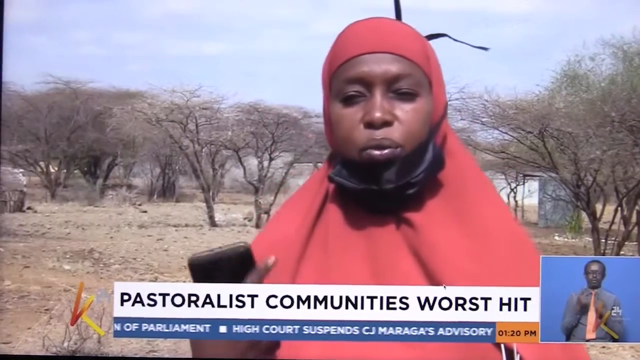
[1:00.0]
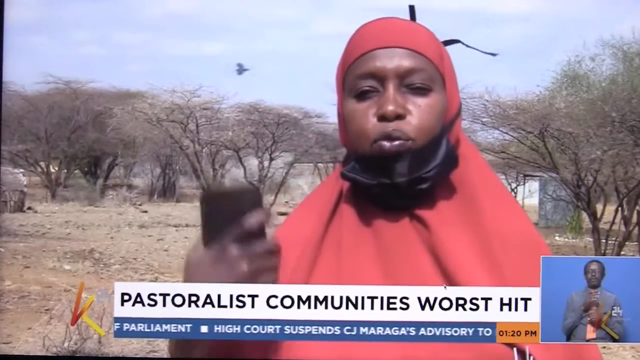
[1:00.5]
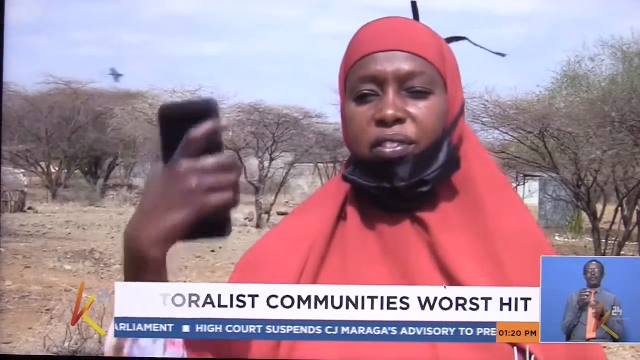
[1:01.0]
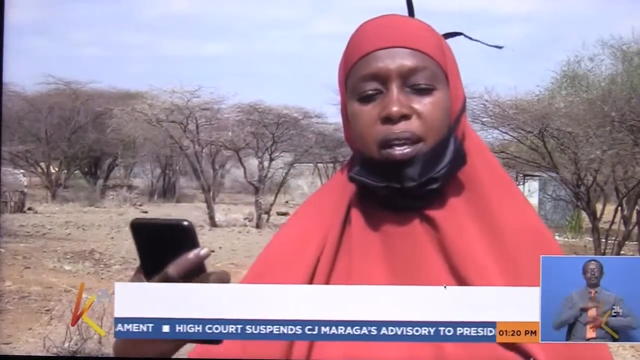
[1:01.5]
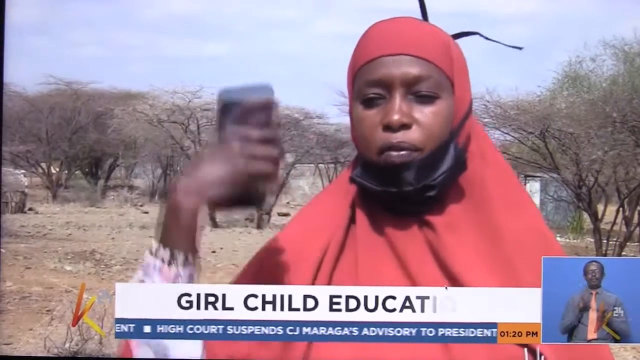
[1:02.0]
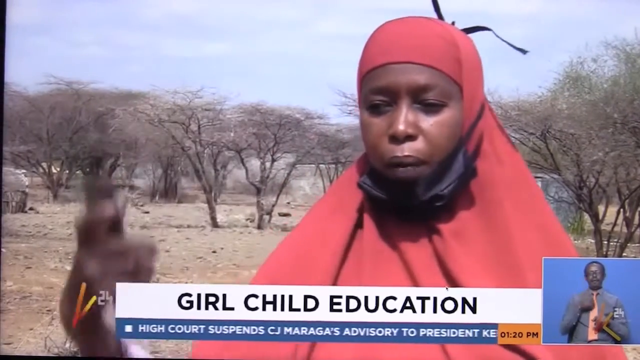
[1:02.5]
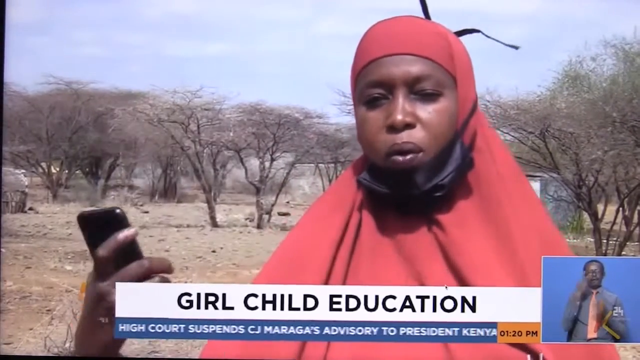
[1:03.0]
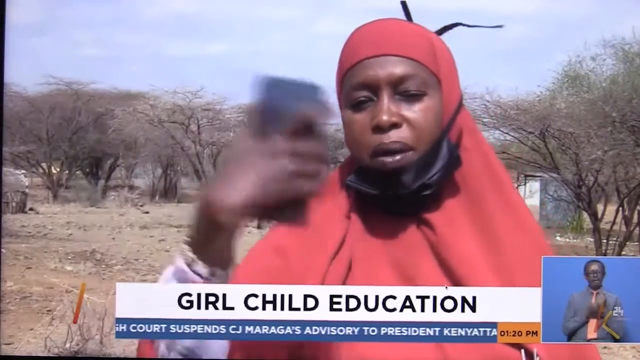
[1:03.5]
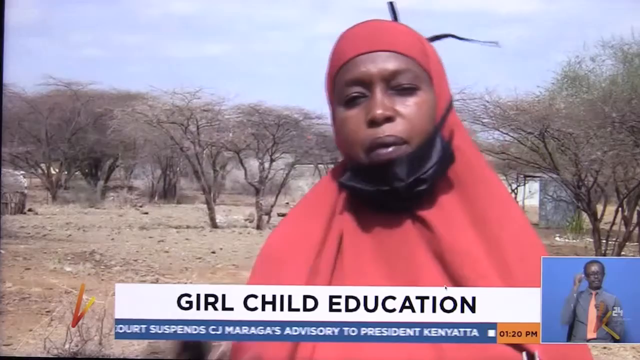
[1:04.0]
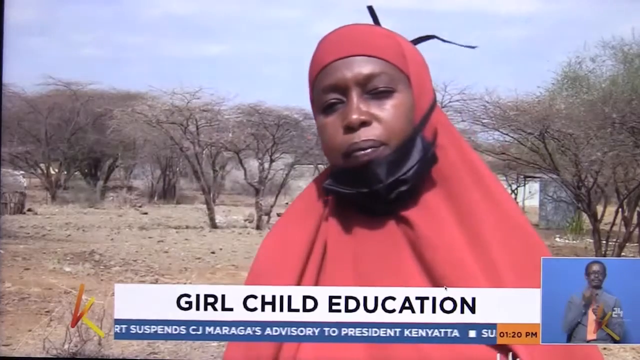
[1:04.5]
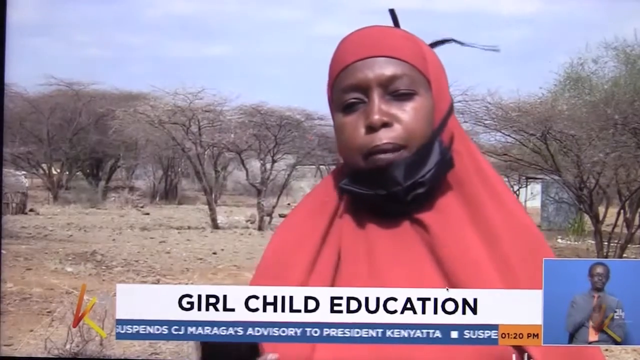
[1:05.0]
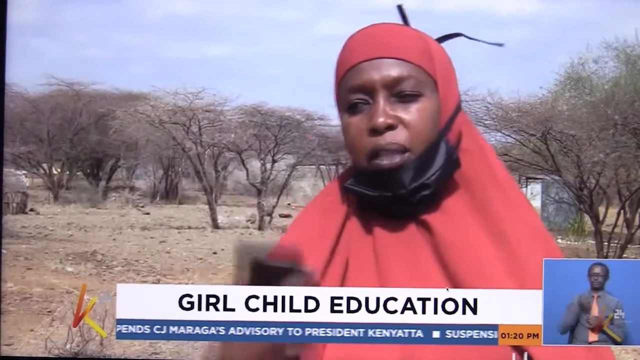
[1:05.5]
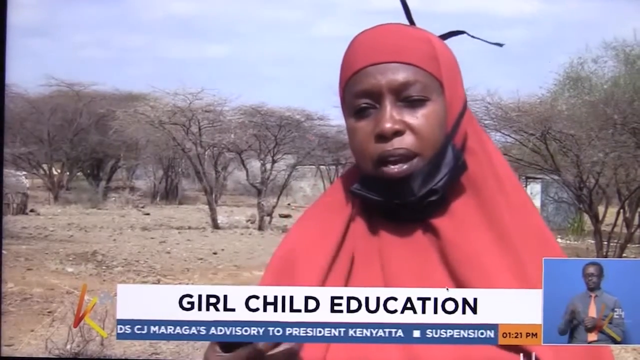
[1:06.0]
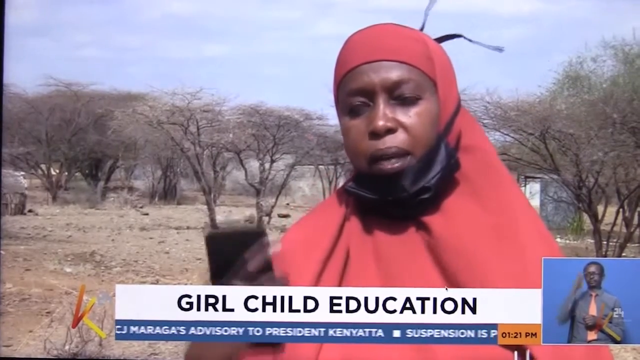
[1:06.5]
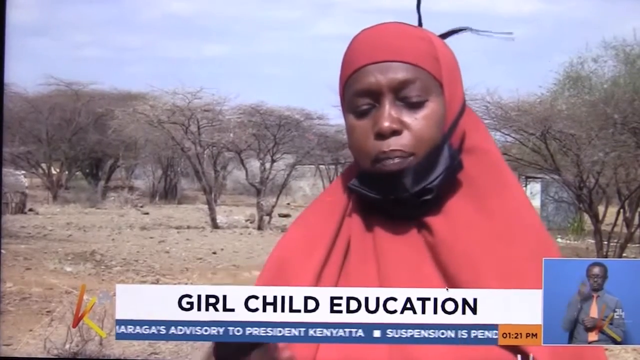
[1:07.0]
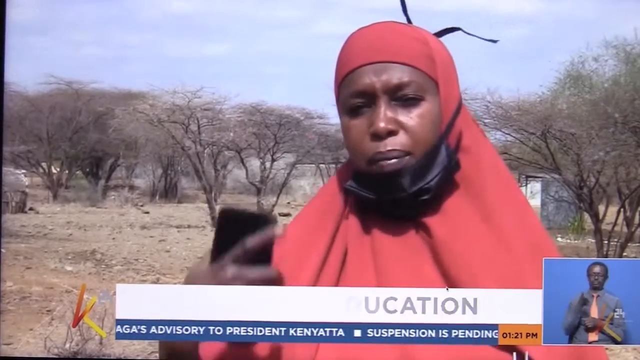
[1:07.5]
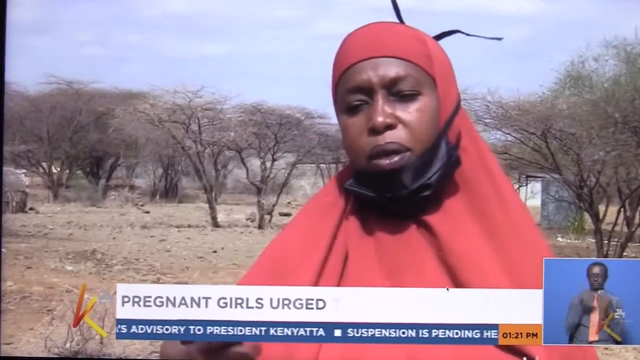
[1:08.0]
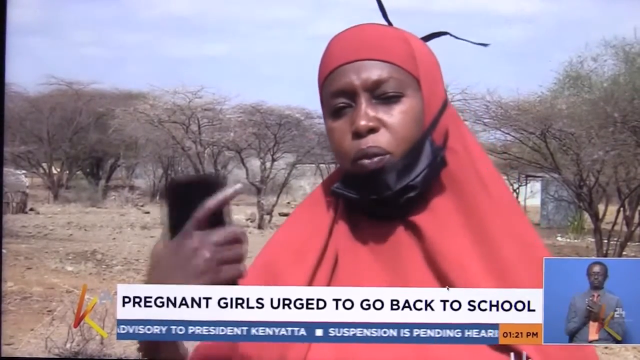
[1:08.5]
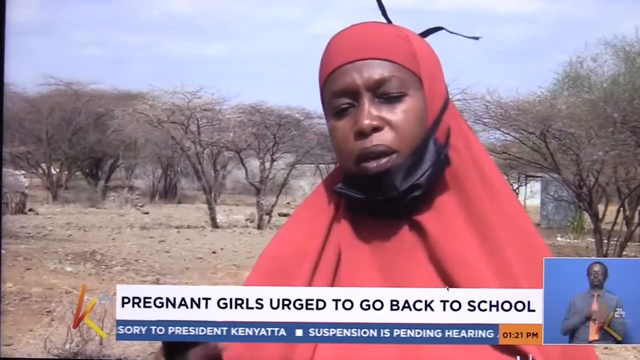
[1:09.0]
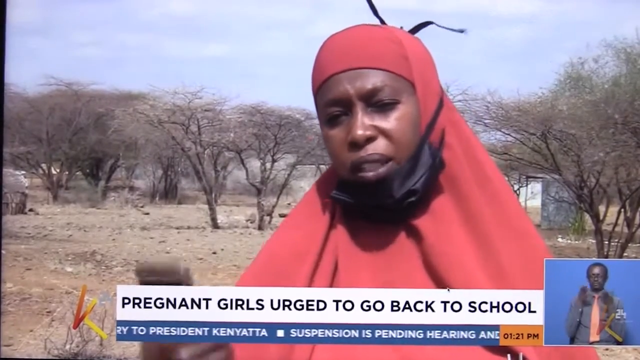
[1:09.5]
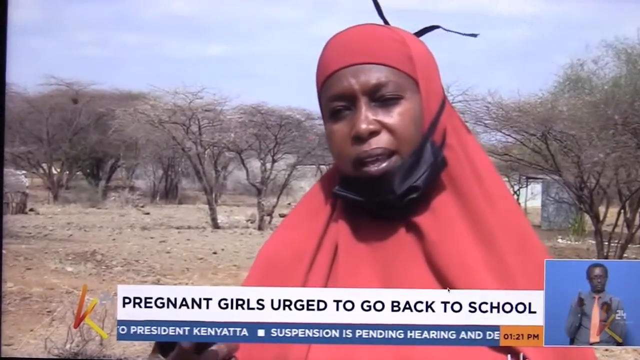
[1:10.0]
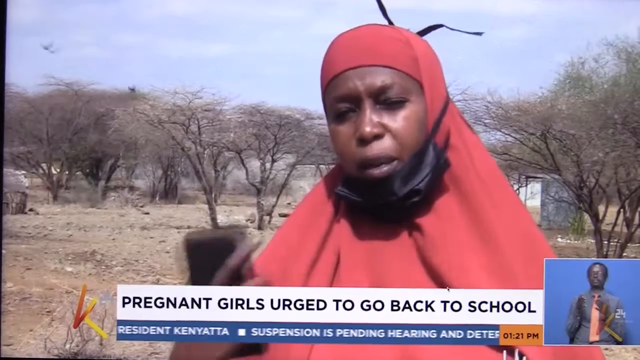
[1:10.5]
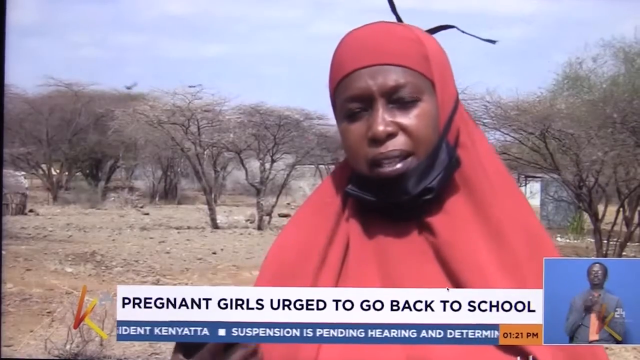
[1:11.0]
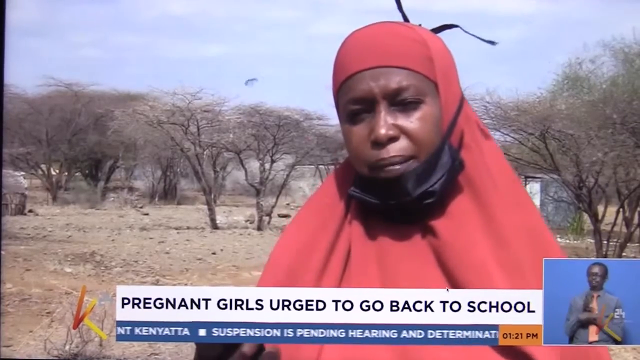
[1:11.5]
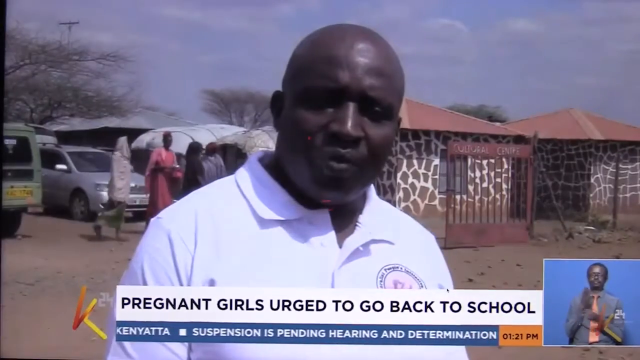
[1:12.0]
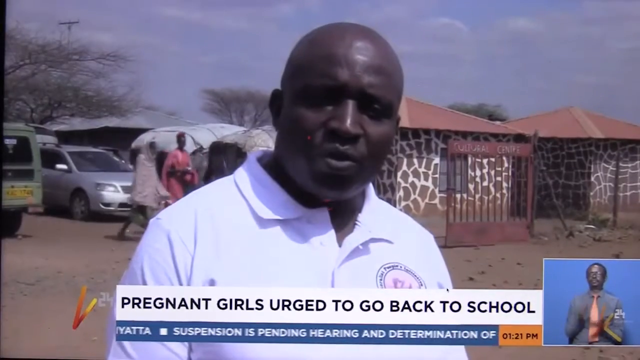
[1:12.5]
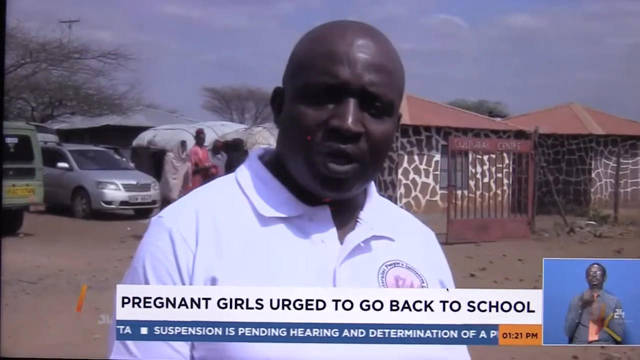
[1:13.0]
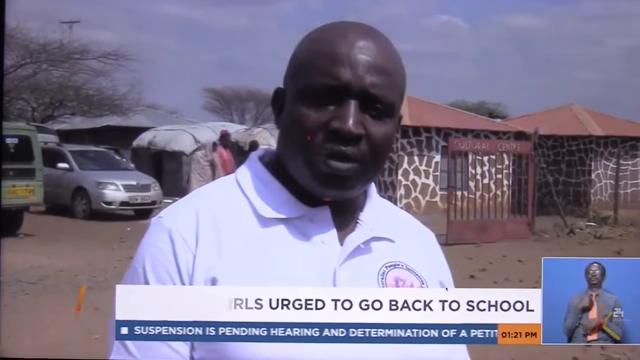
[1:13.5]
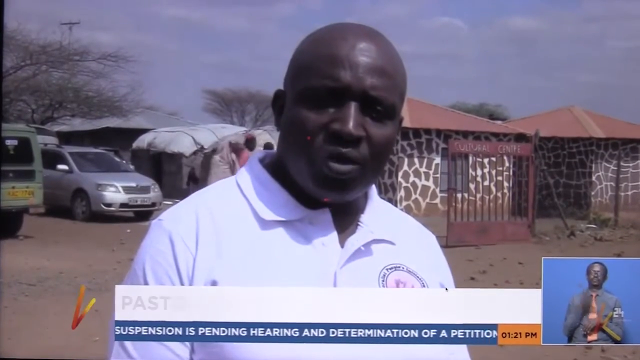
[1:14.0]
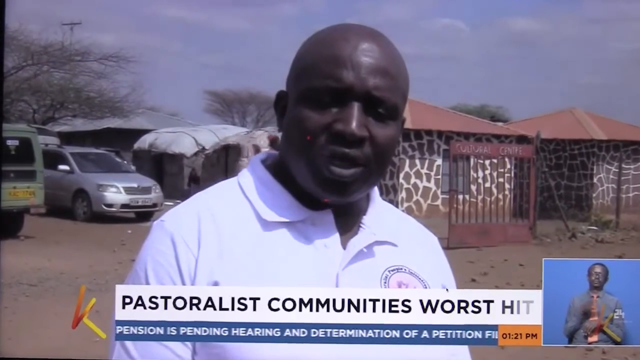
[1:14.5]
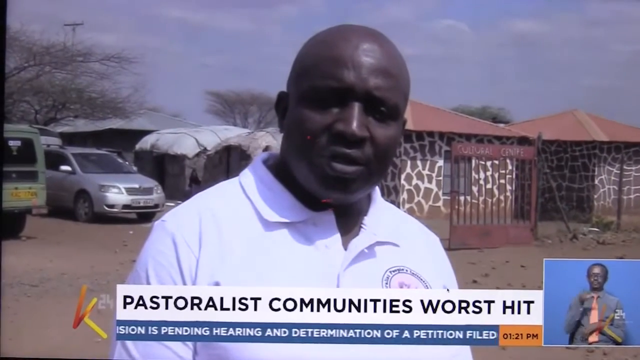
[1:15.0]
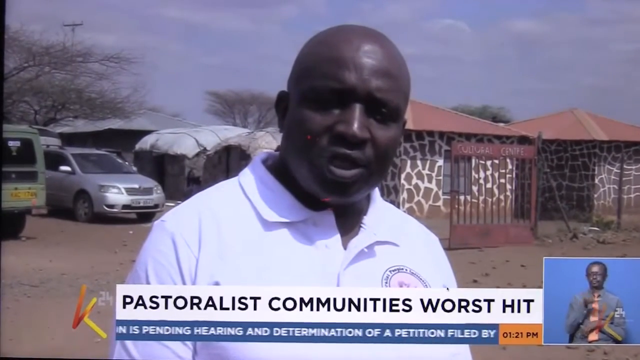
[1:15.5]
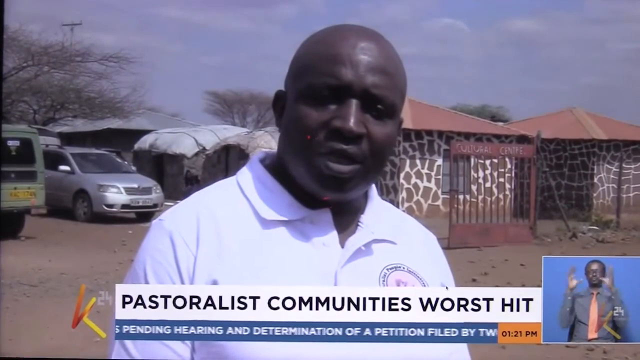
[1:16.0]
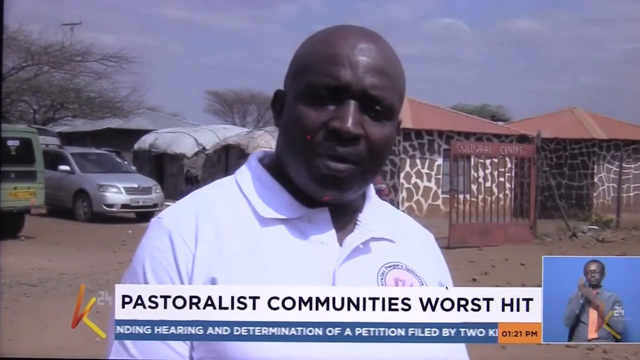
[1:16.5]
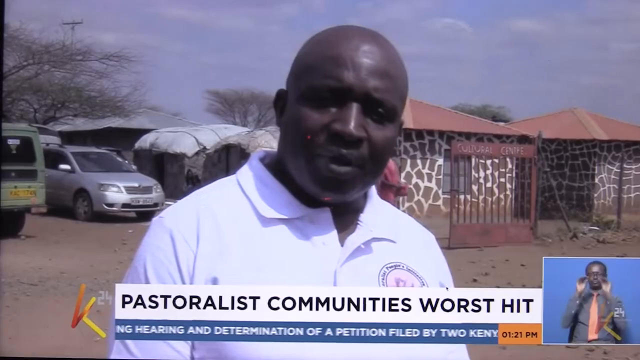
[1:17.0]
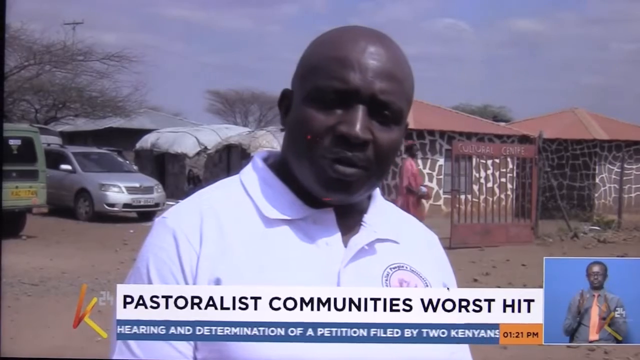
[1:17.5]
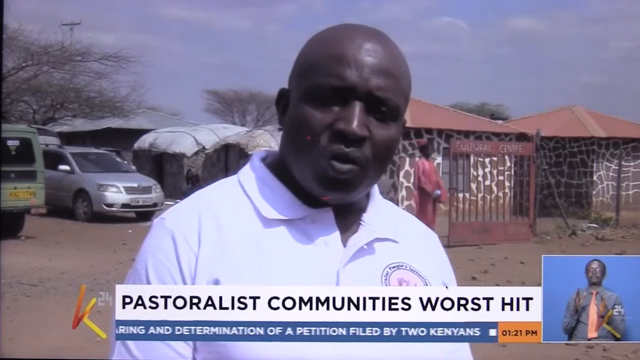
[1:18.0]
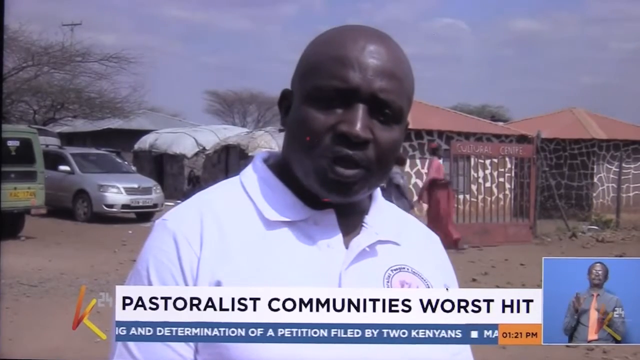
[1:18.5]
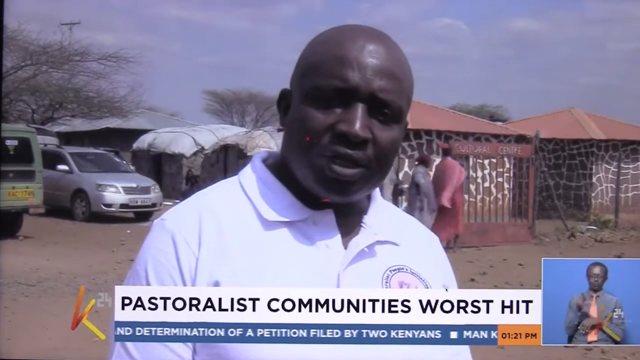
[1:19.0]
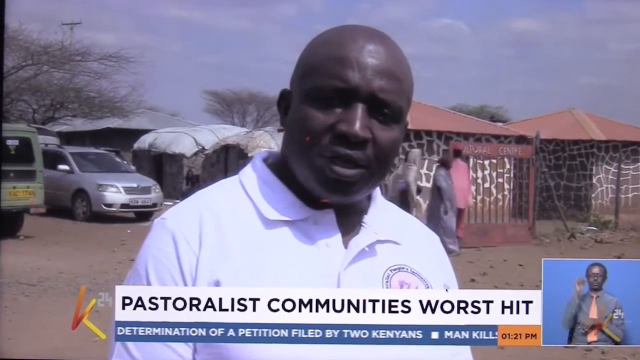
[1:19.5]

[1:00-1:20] In a separate rectangle in the bottom right corner, a man with dark skin does sign language against a blue background; he wears glasses, a grey shirt and an orange or pink tie. The main footage, apparently from an African country, shows a woman in a red headdress holding a phone in her right hand. She has a Covid mask, but it is not covering her mouth. The background is a sort of dry, arid setting with trees that have very few leaves. She is talking to the camera, being interviewed, and text at the bottom of the screen says girls are being urged to go back to school. The shot then switches to a man in a white polo top. Behind him are a couple of buildings whose brickwork almost looks like a giraffe pattern, and a red fence is over his shoulder on the left of the screen. One vehicle appears to be a silver Mercedes-Benz; another is green, maybe a van. He continues talking as three or four people walk behind him to the right of the screen.